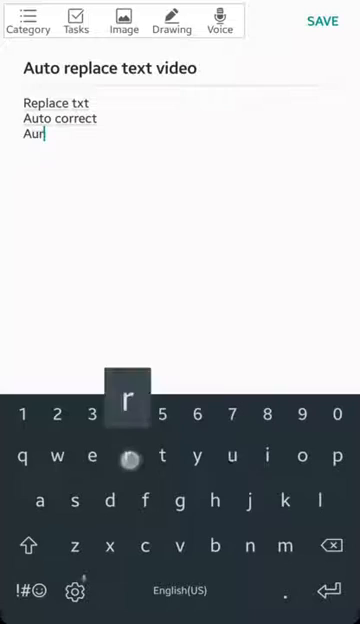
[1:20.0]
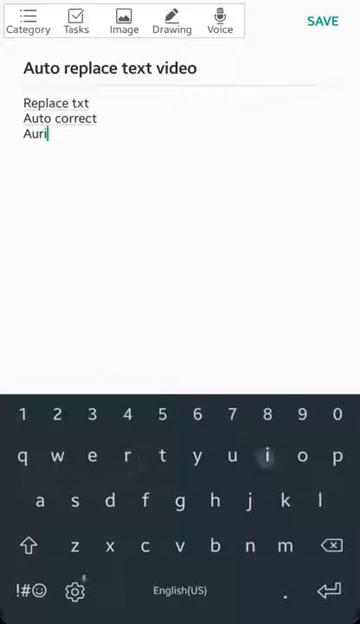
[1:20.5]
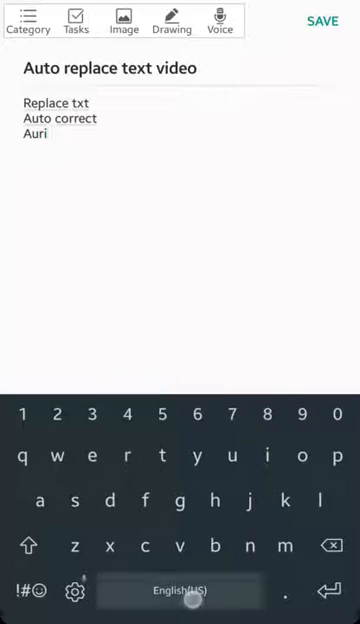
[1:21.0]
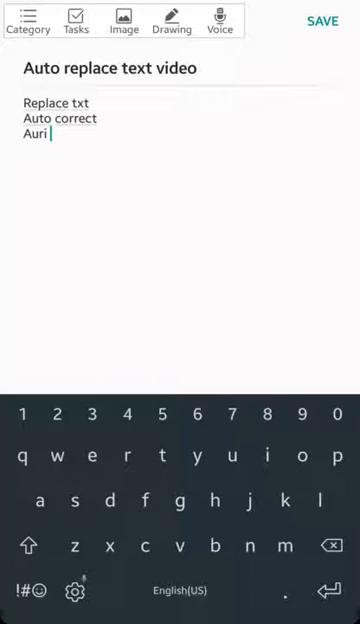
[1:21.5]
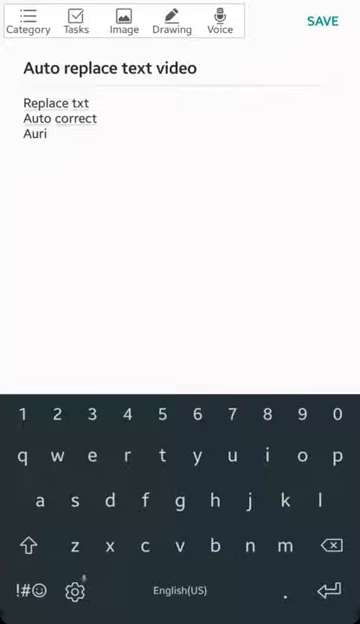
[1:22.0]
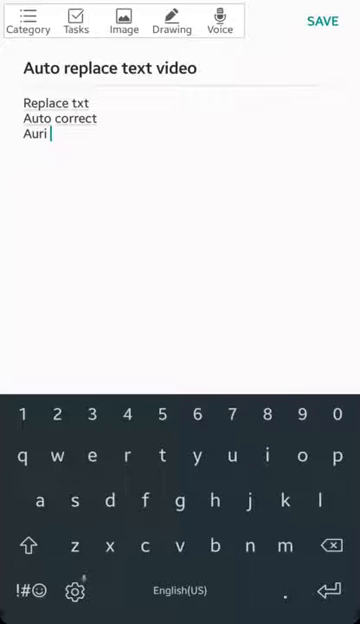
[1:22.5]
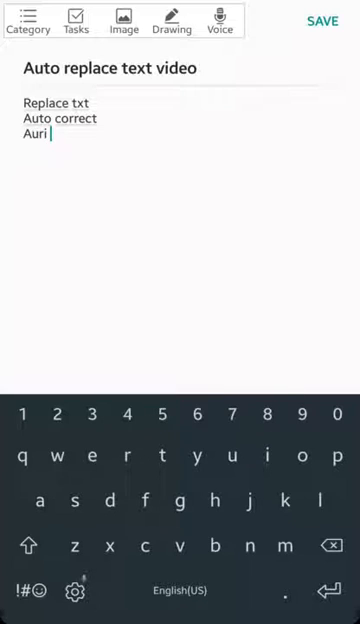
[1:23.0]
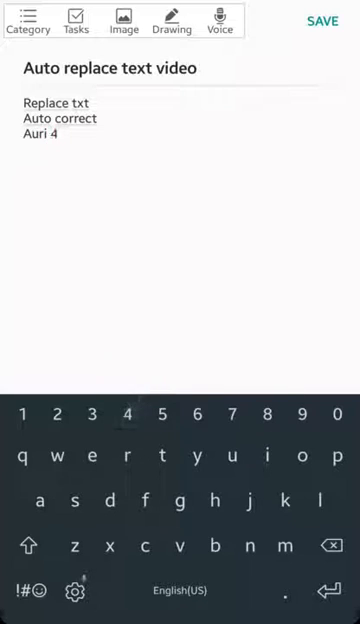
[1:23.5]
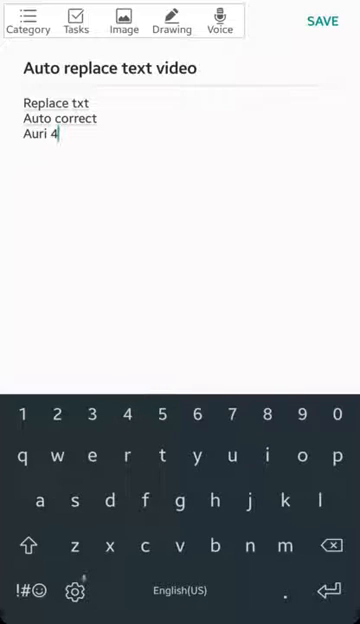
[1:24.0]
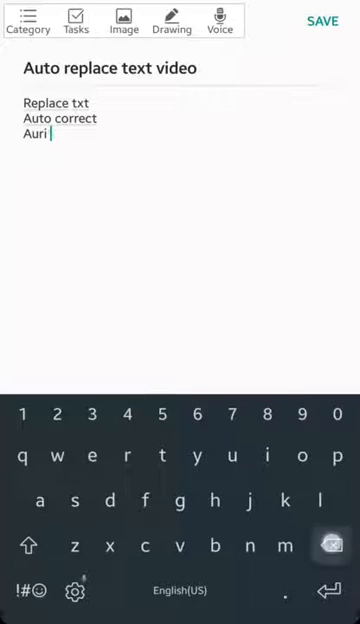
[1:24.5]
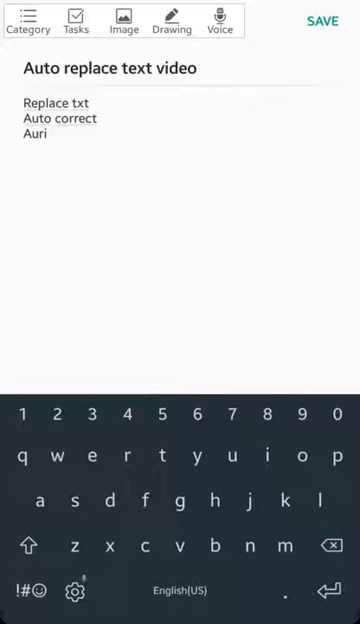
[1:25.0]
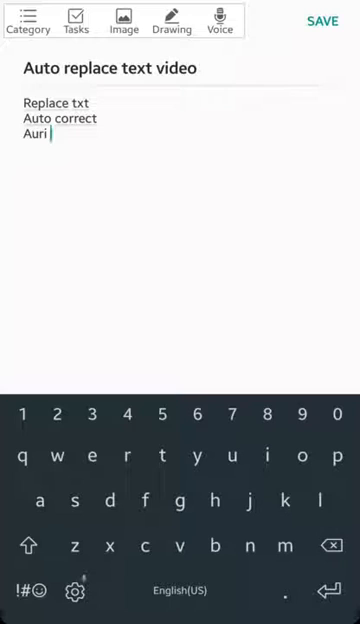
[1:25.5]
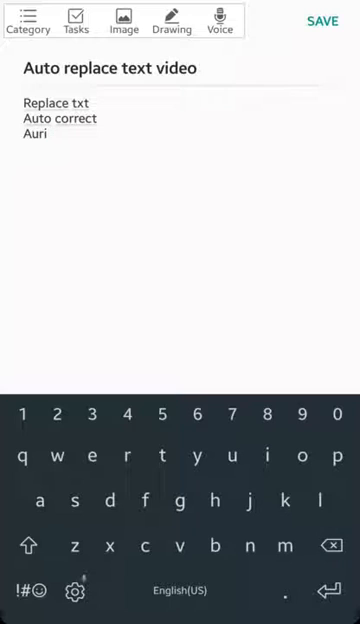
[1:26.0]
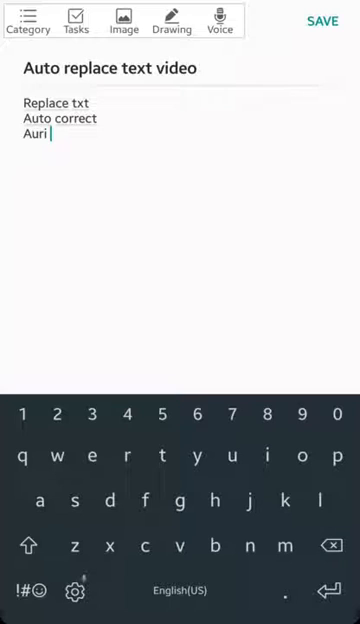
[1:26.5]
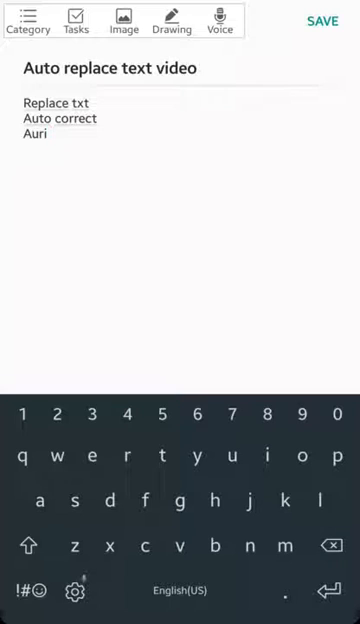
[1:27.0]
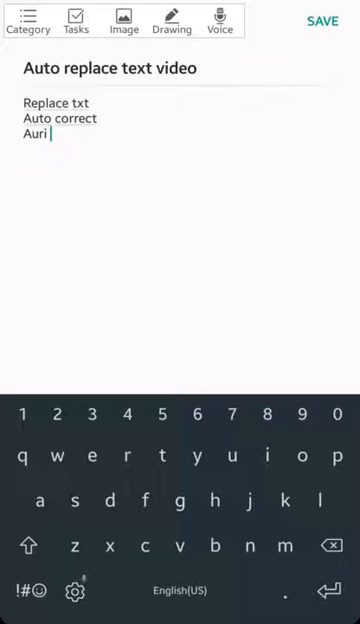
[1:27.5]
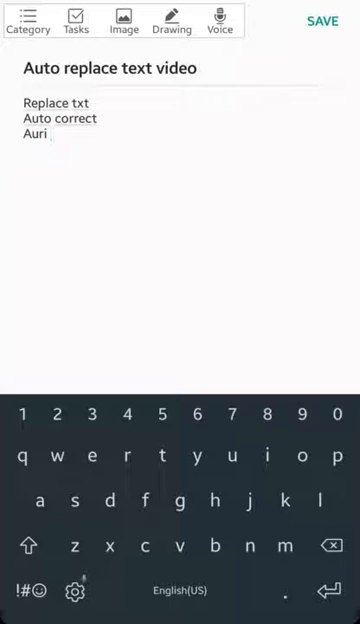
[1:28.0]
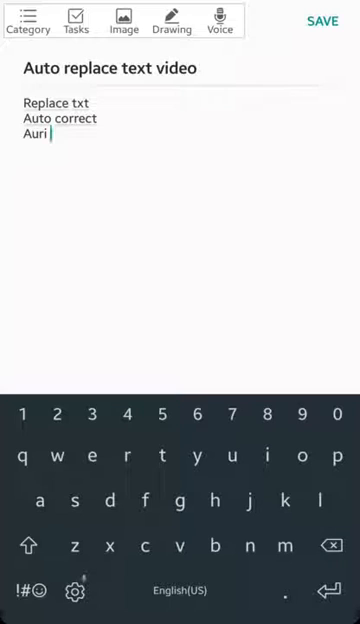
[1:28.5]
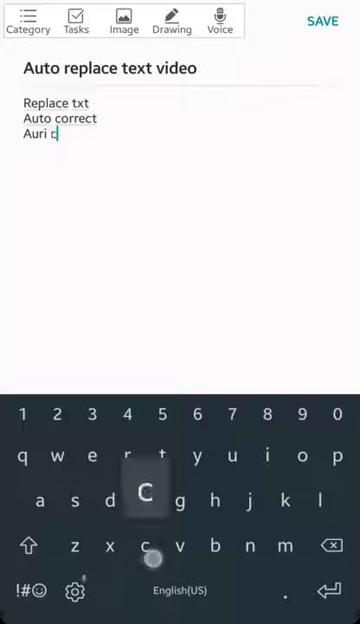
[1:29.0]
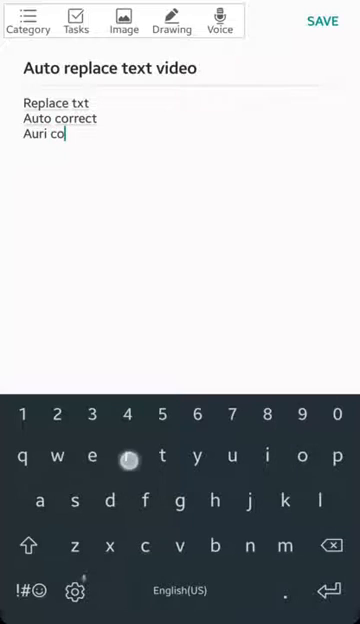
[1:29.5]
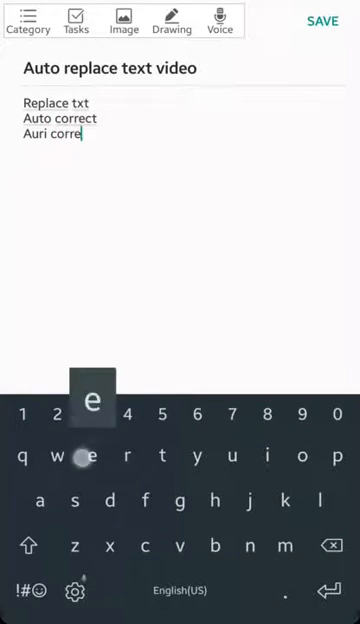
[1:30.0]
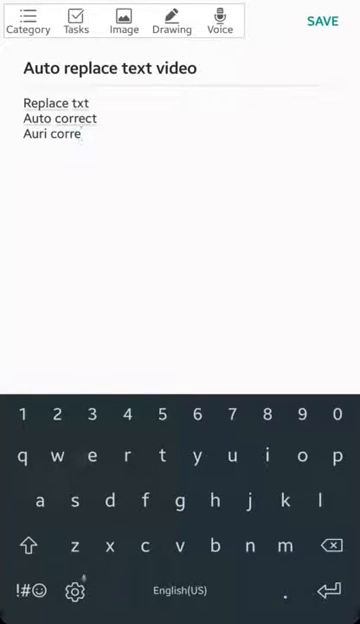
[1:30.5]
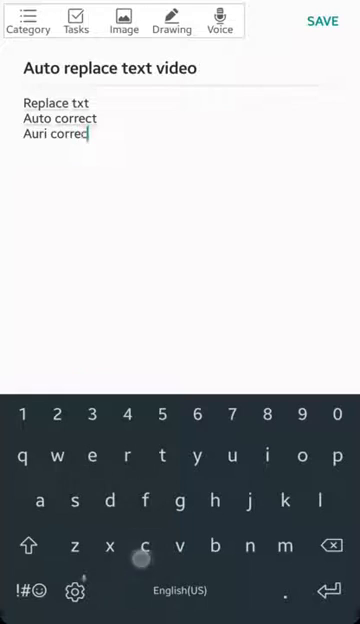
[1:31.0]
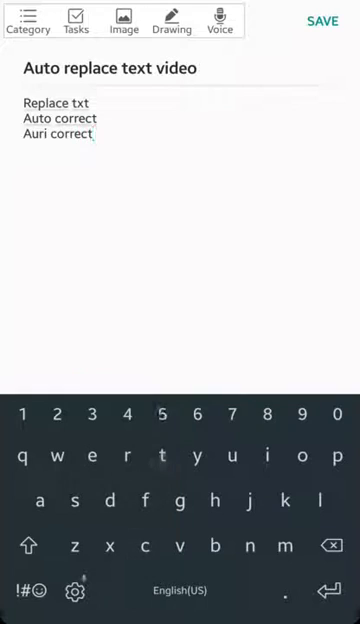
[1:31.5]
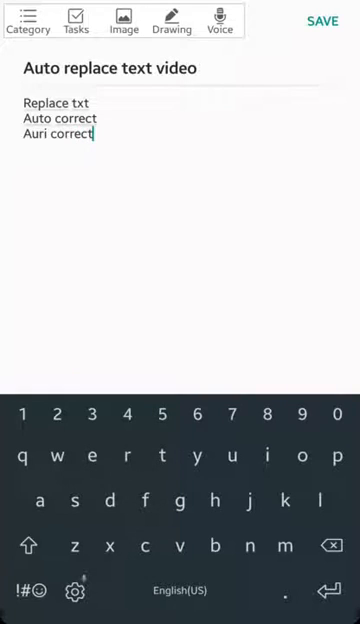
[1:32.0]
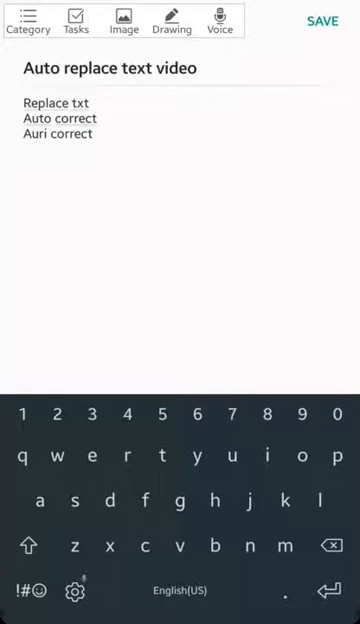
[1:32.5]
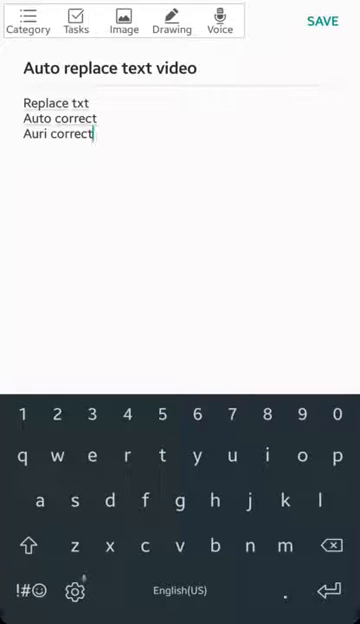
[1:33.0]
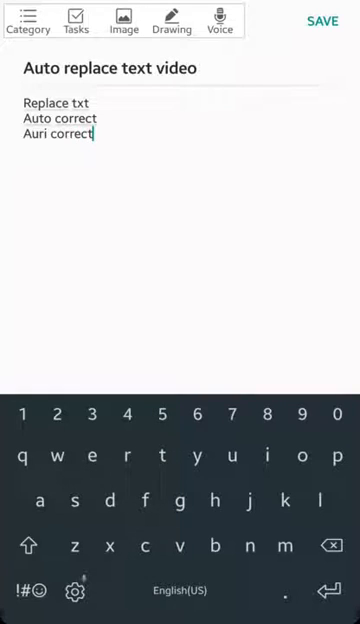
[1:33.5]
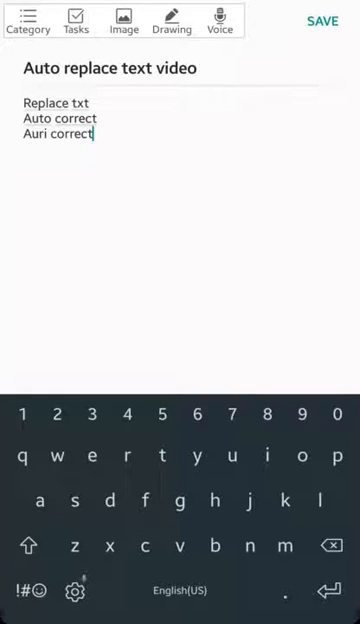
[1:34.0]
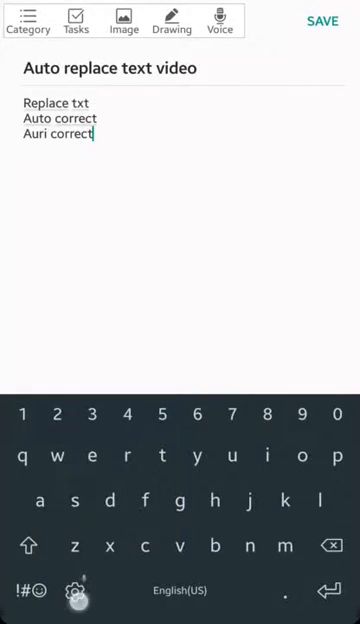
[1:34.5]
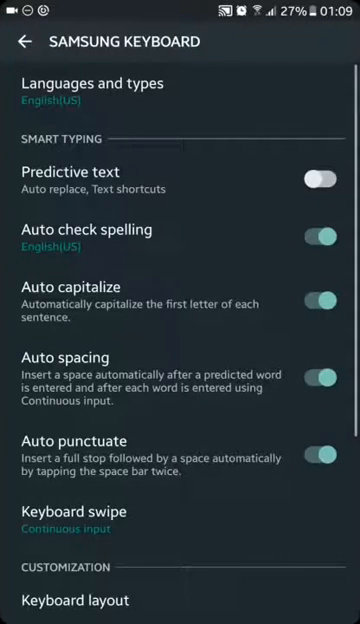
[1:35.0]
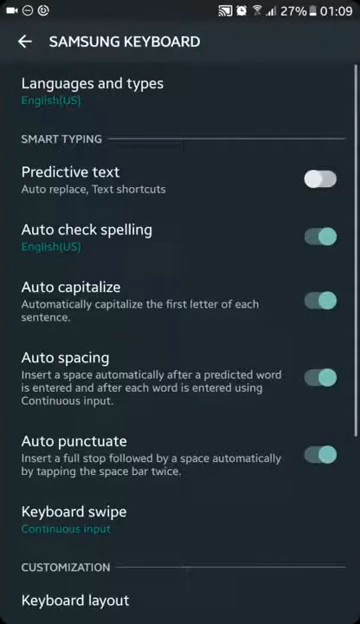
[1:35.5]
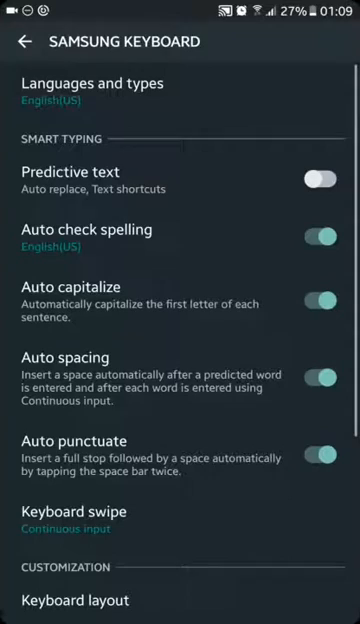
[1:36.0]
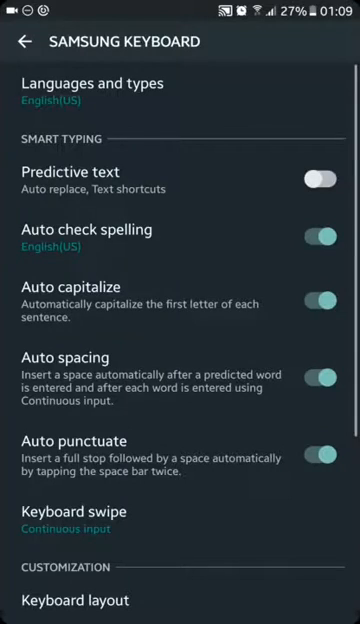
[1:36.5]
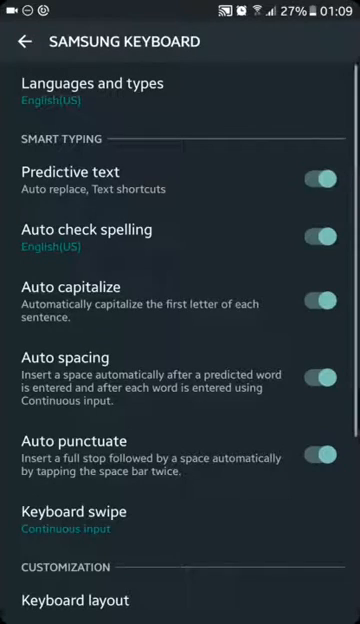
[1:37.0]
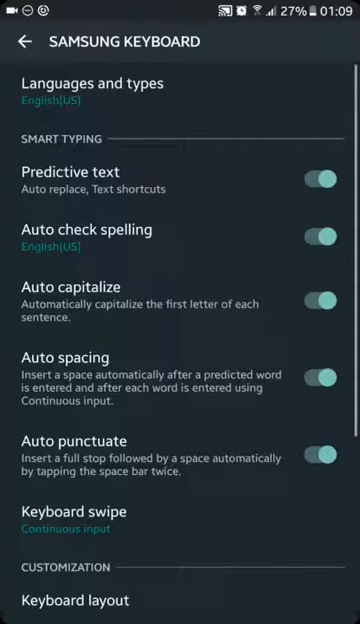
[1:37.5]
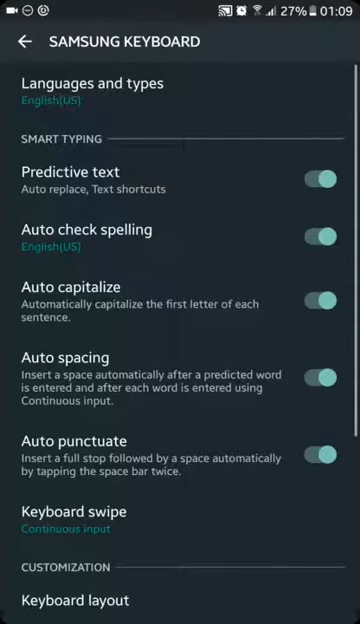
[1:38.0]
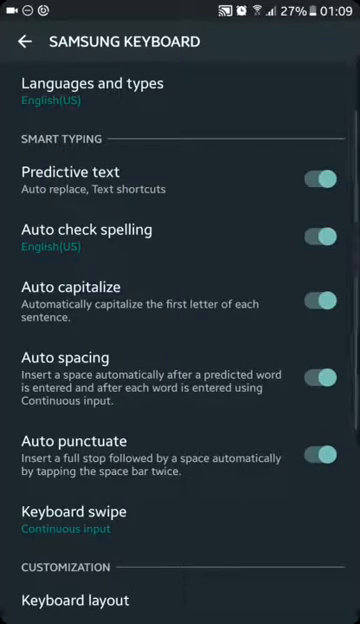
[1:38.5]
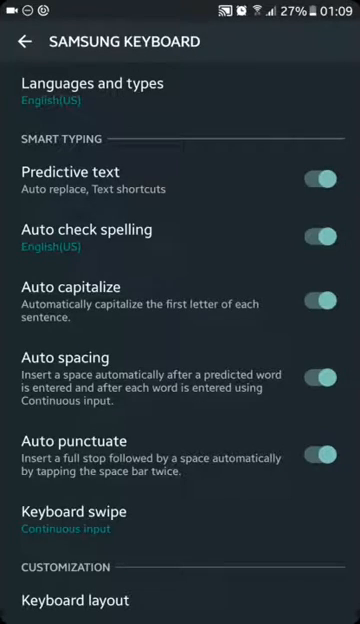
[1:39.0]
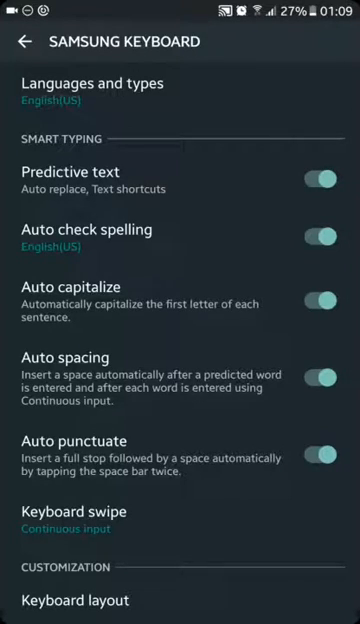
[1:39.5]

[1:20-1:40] The user types something else into the field beneath "autocorrect": the letters A-U-R-I, followed by a word beginning with C, "correct," so that "AuriCorrect" appears under "autocorrect." The background around the typed text stays white. The phone keyboard remains at the bottom of the screen, with the numbers 1 through 0 followed by the alphabet, not in alphabetical order. A caps button shown as an upward arrow is on the left, and a backspace button shown as an X is on the right of the bottom row. The view then switches back to the Samsung keyboard screen, where the user's cursor appears to be over the predictive text toggle button.